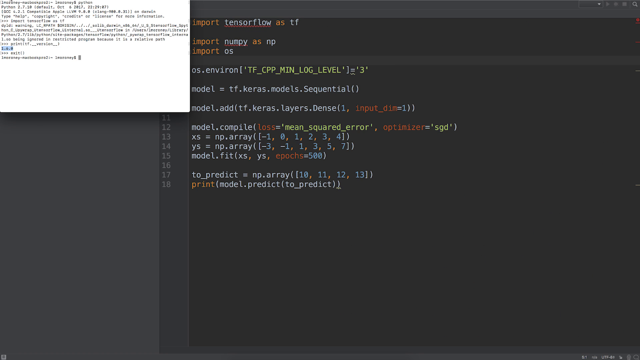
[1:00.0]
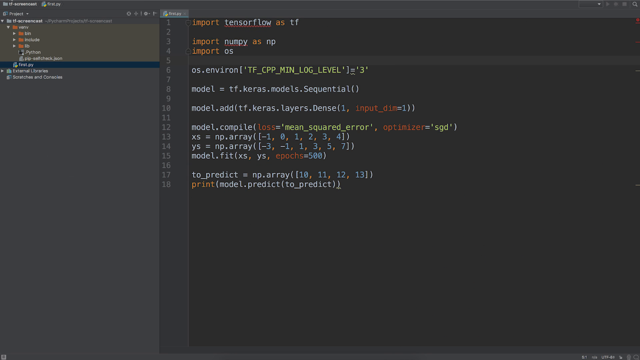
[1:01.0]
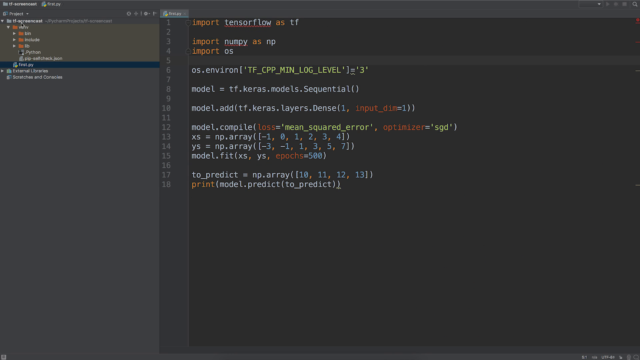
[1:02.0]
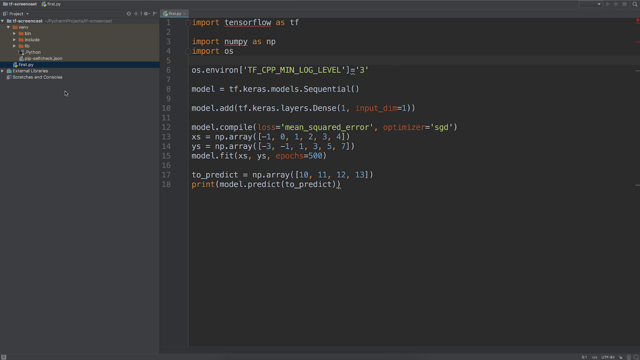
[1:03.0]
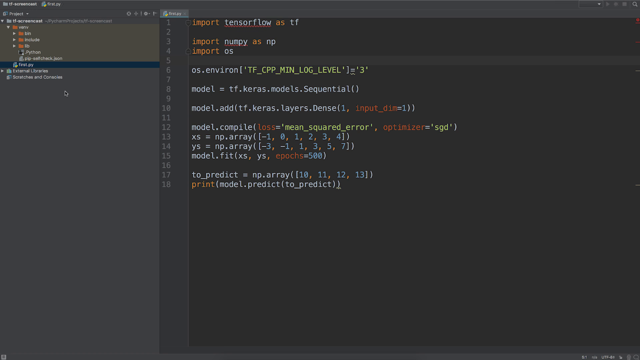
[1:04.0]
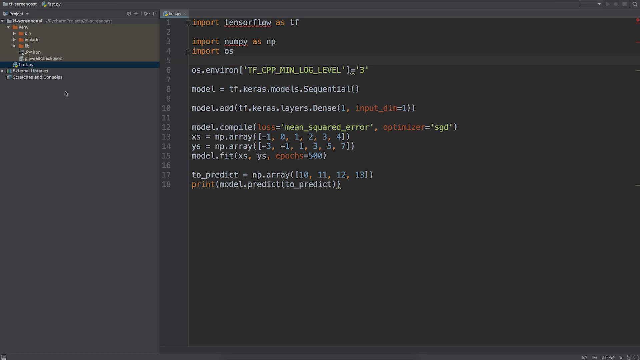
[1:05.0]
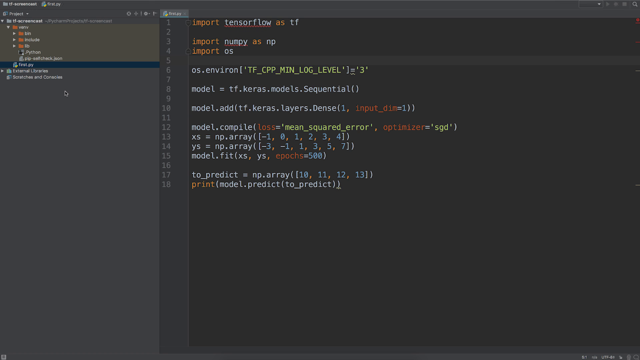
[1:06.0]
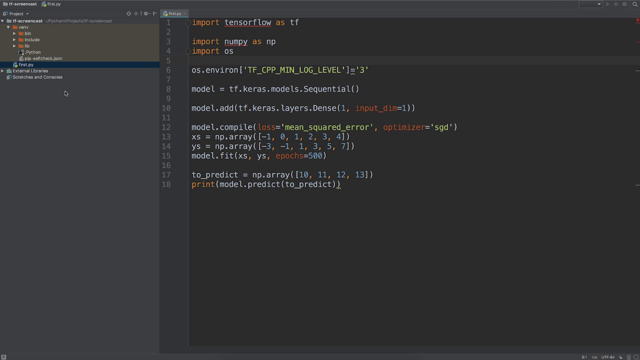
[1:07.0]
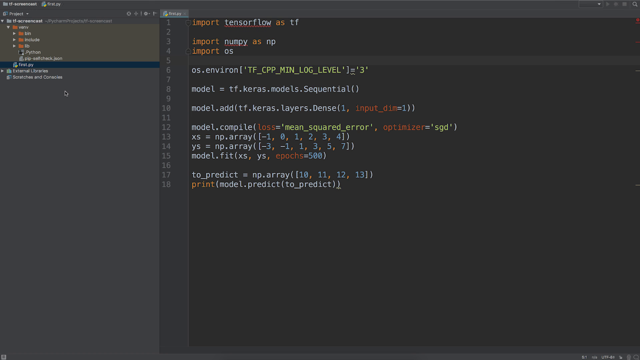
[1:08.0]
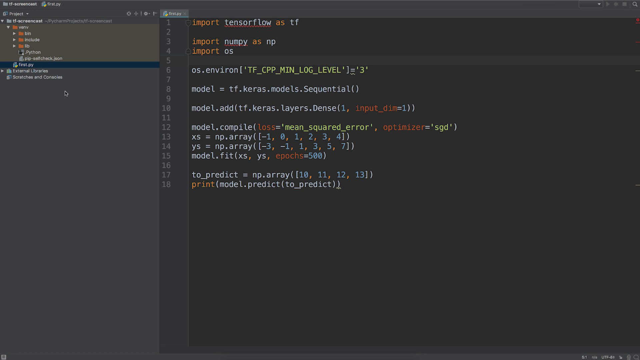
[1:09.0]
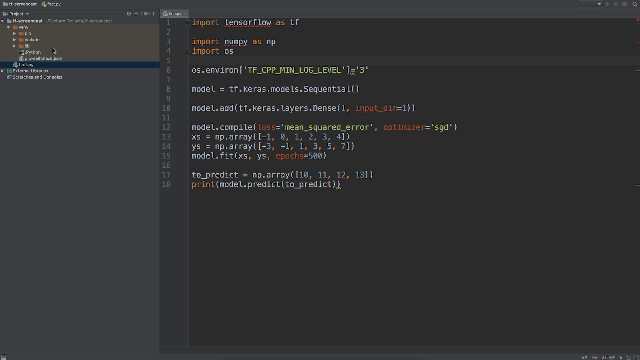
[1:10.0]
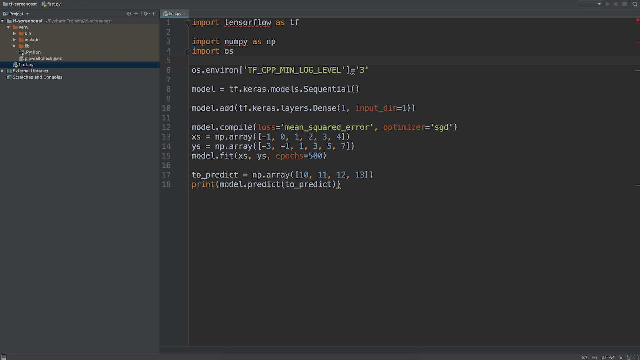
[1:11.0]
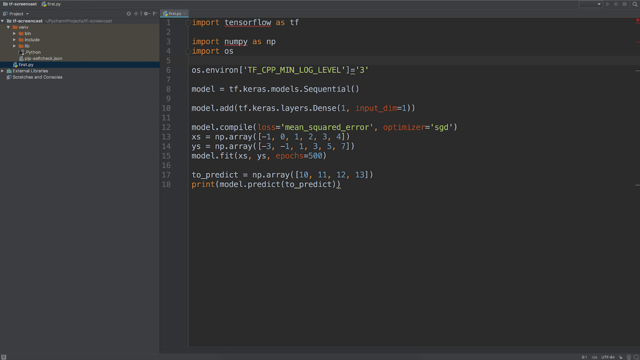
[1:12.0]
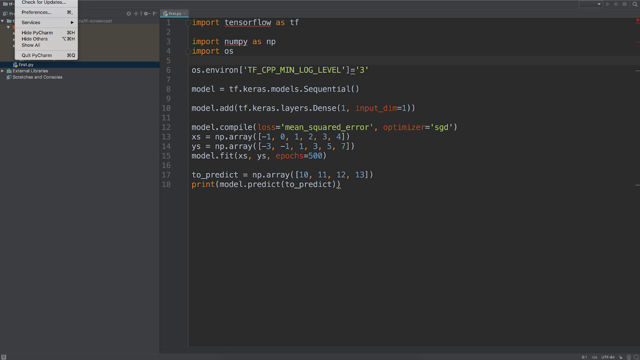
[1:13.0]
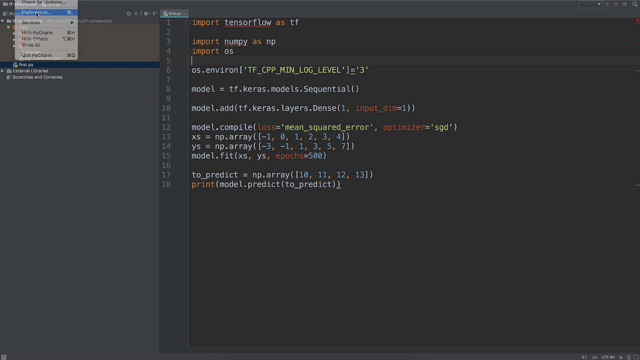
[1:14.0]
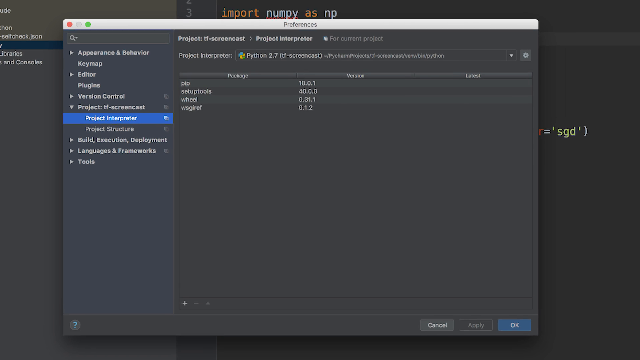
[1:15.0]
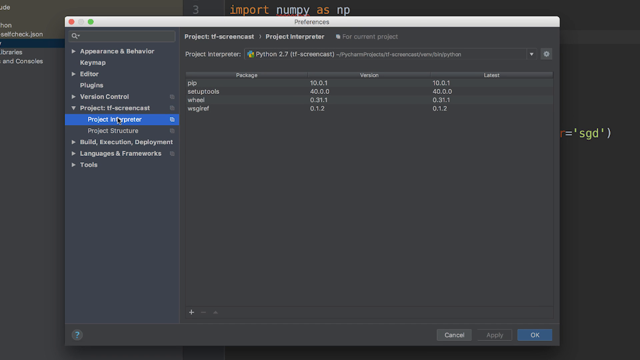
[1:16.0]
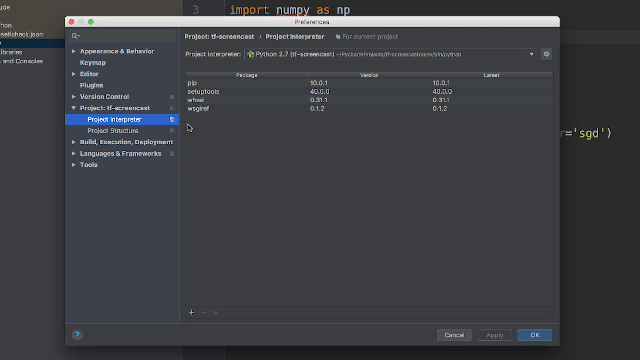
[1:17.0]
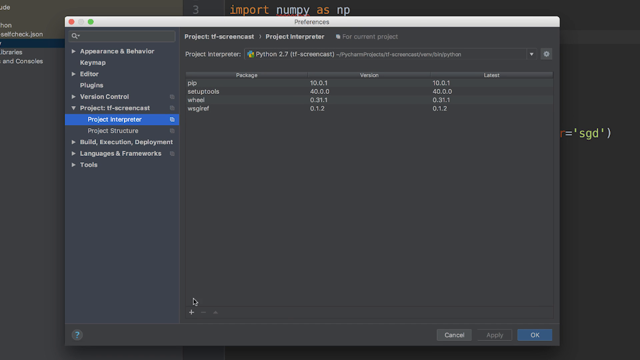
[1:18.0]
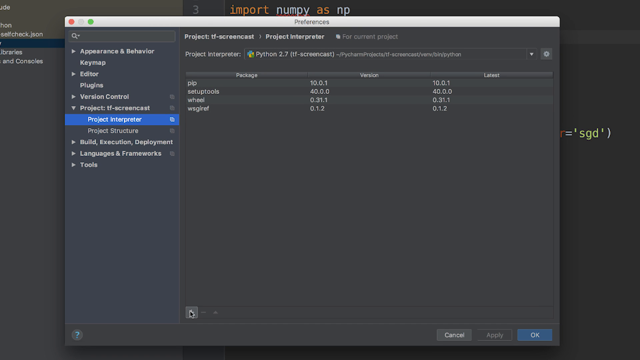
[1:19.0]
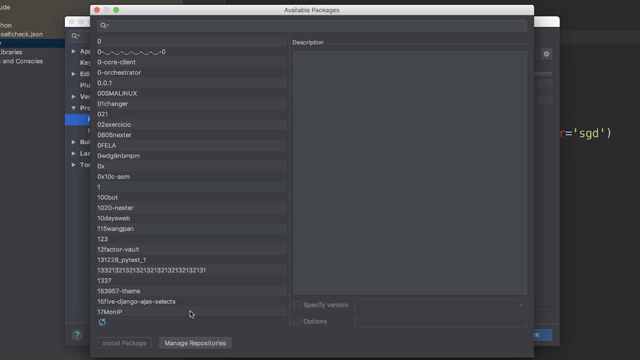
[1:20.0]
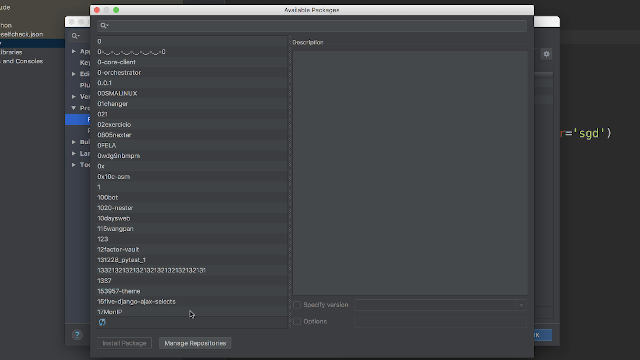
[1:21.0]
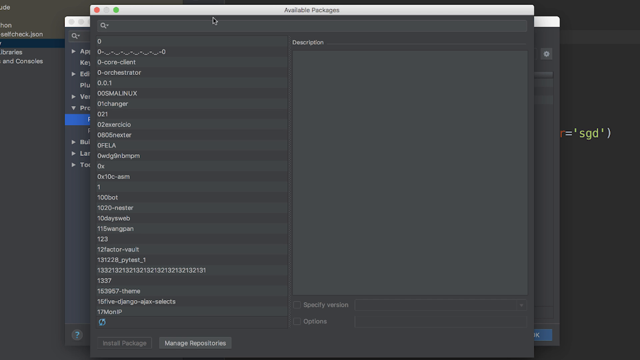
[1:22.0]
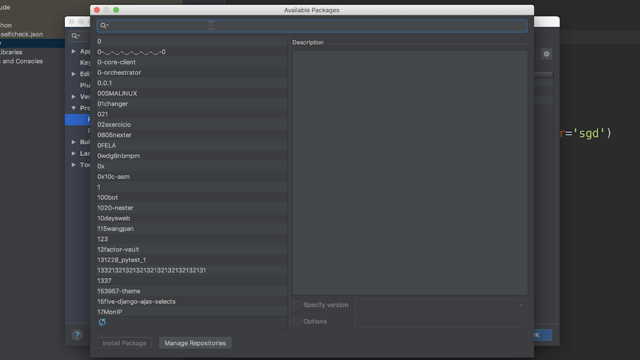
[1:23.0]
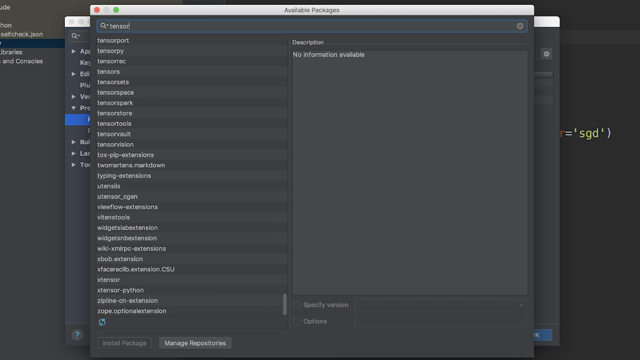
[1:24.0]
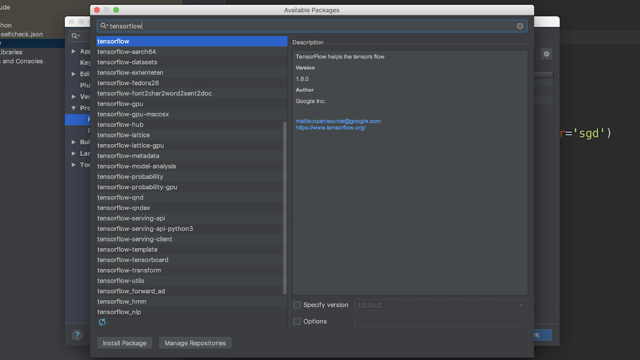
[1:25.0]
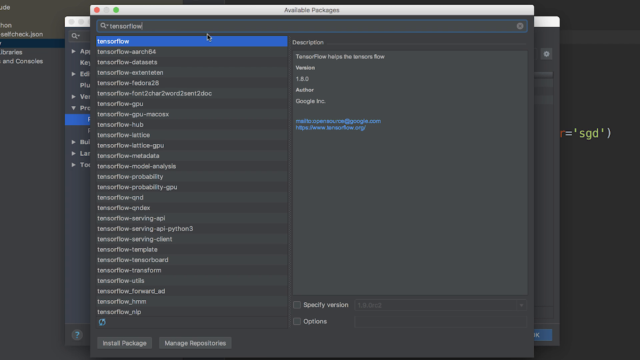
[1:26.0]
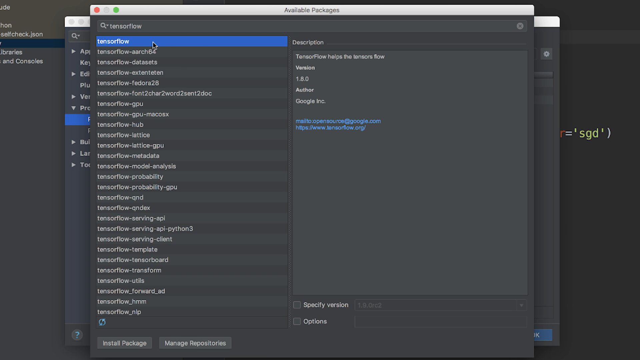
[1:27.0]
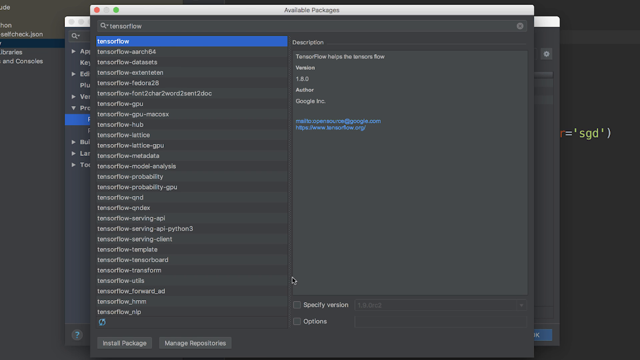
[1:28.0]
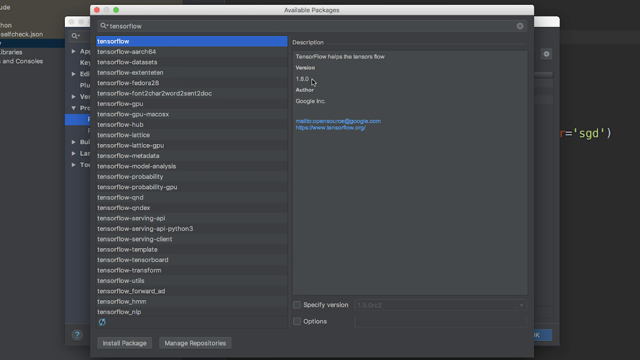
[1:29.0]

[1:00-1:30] The white page does a little wave out and goes to the bottom of the screen. The view returns to his code, mainly black on the right two-thirds and gray on the left one-third, full of code. Nothing is happening at first; his cursor is on the screen and moves up a little, and he makes the view a little bigger. He presses "project," and "project interpreter" is highlighted in blue. He brings up another gray screen, so there are now two screens on top of his original screen. He works deep in TensorFlow code; recognizable words include "select," "model," "print," and "predict."